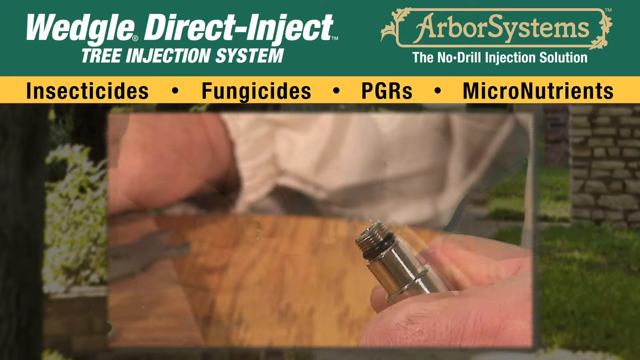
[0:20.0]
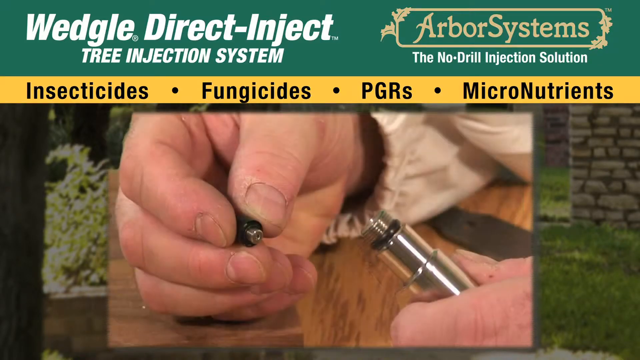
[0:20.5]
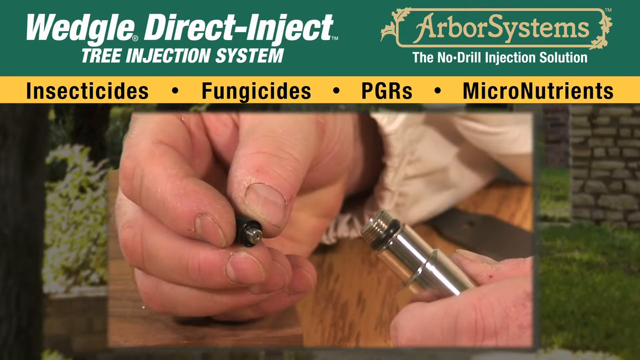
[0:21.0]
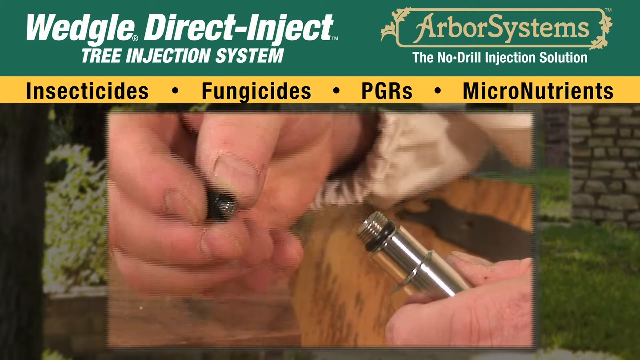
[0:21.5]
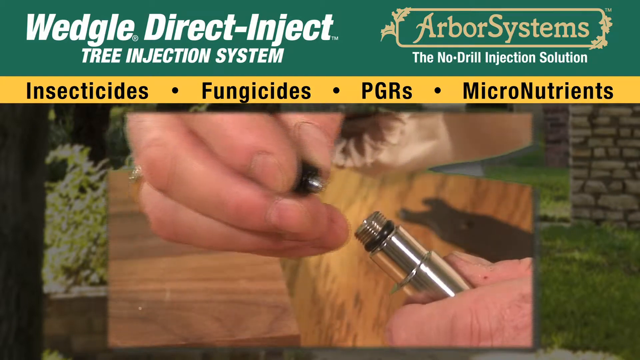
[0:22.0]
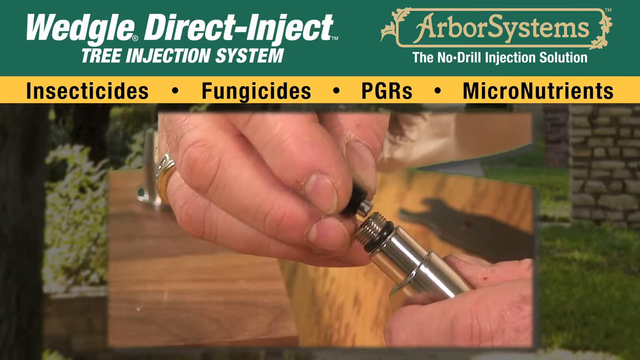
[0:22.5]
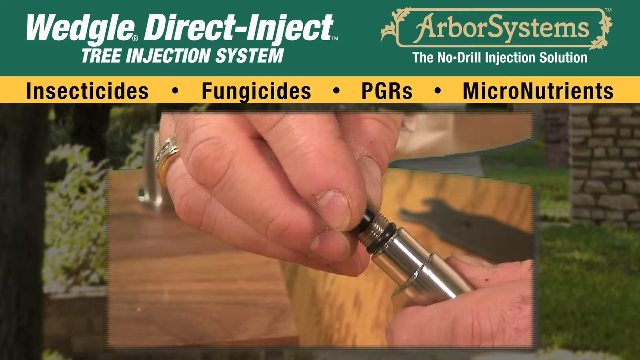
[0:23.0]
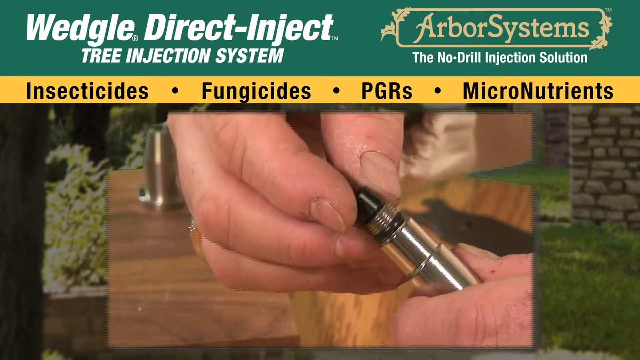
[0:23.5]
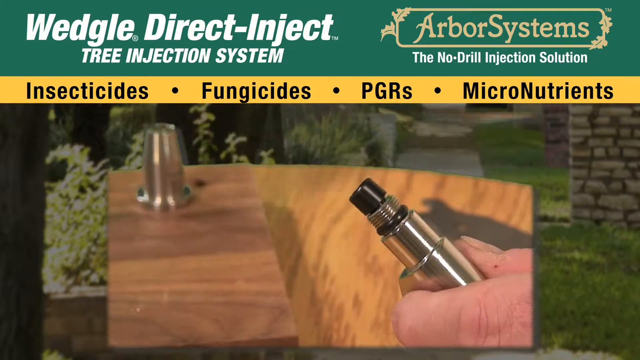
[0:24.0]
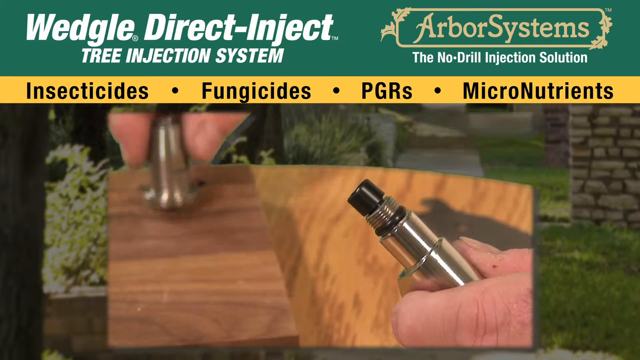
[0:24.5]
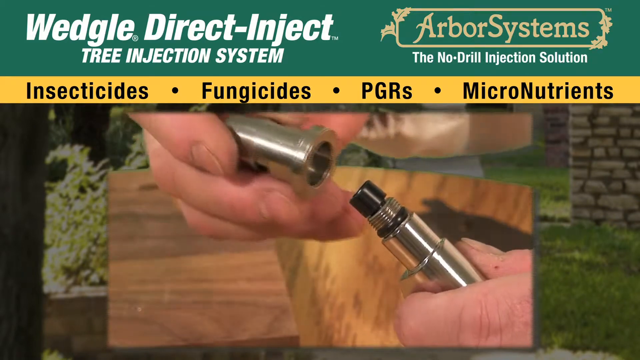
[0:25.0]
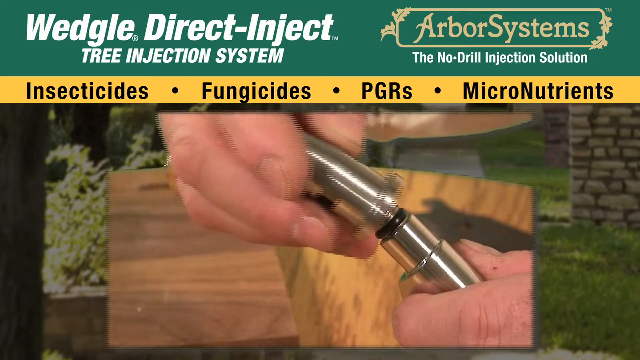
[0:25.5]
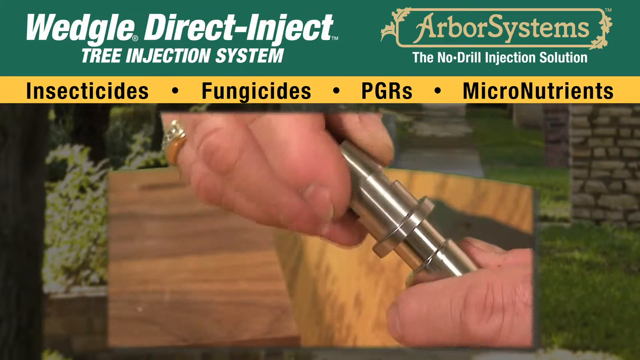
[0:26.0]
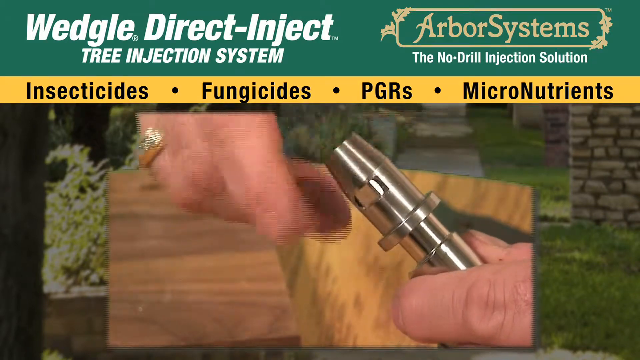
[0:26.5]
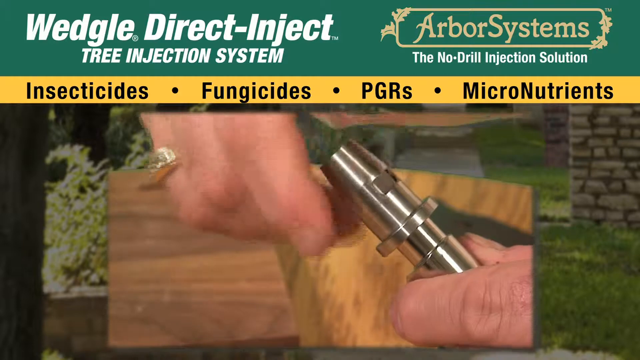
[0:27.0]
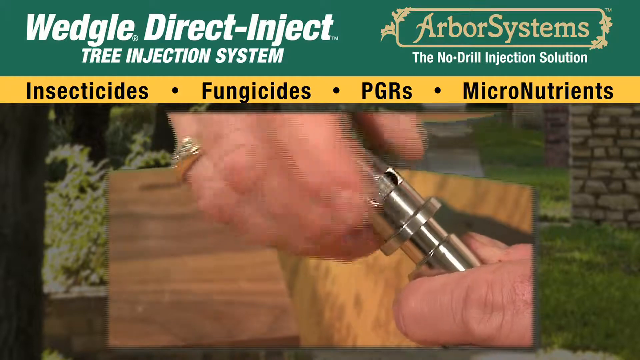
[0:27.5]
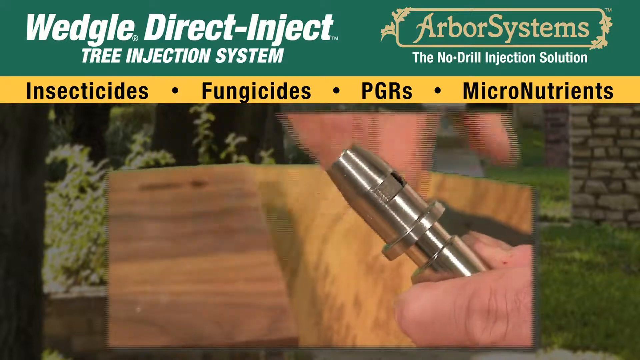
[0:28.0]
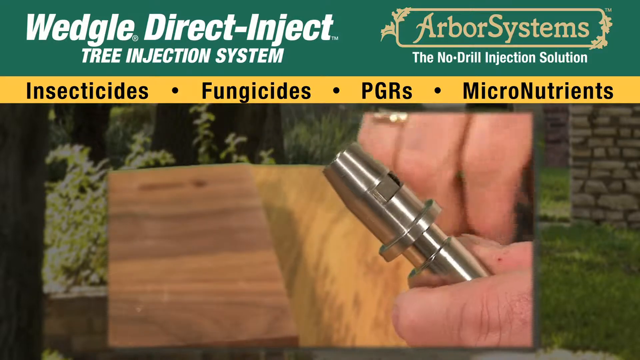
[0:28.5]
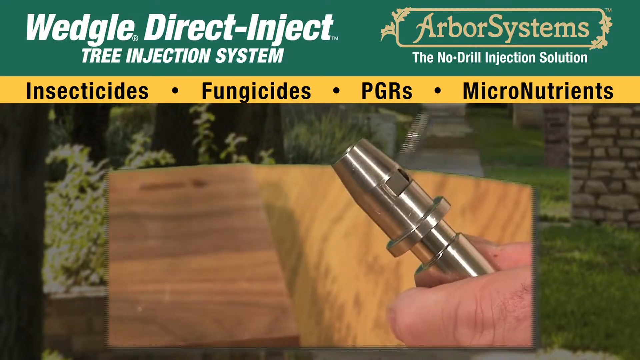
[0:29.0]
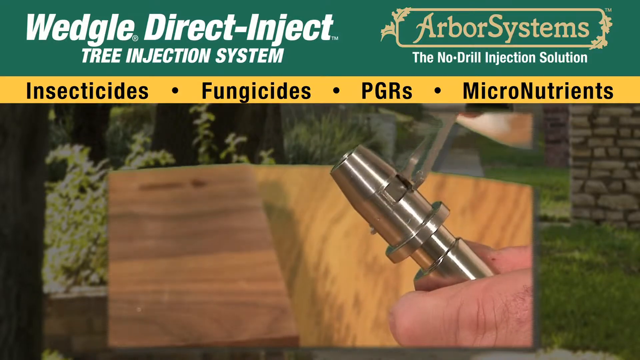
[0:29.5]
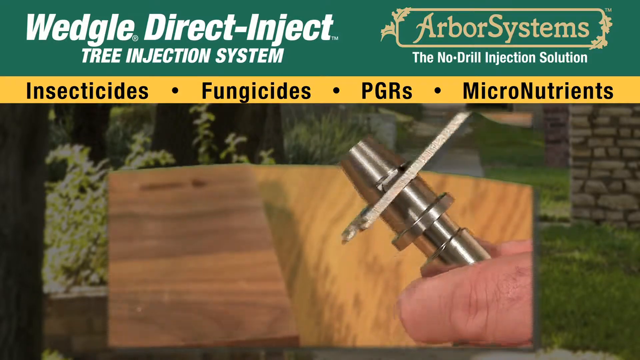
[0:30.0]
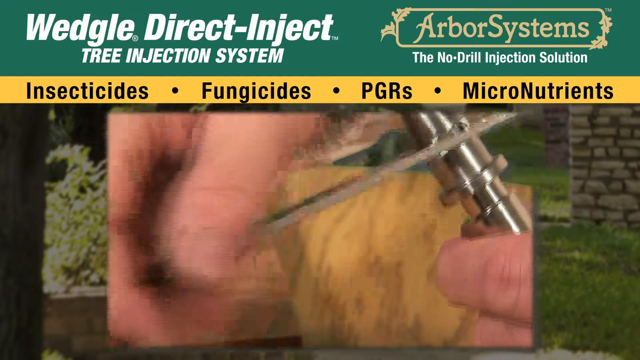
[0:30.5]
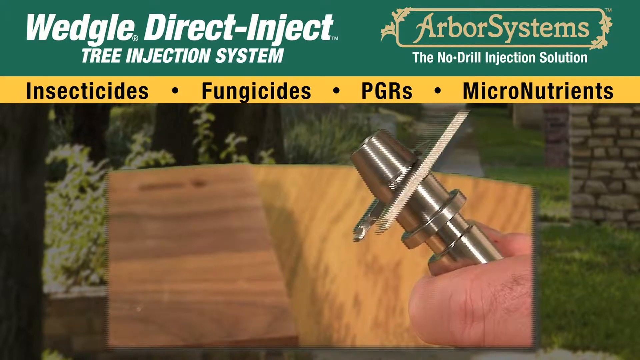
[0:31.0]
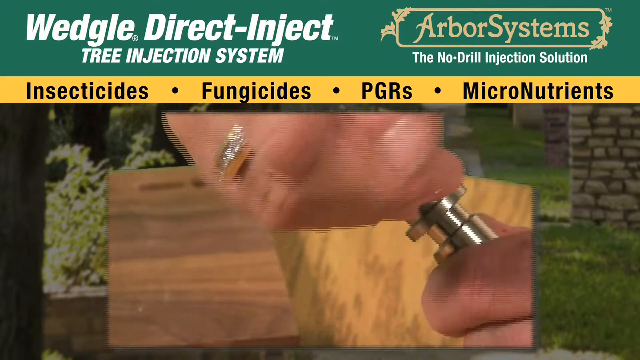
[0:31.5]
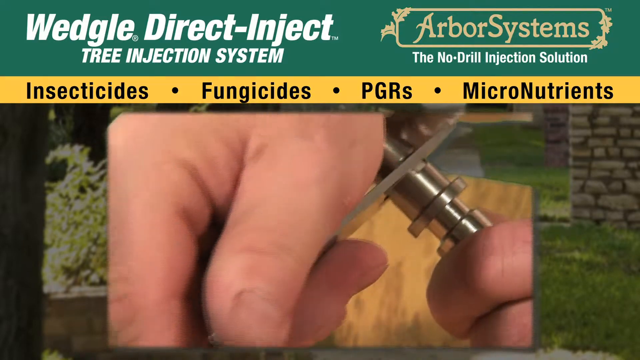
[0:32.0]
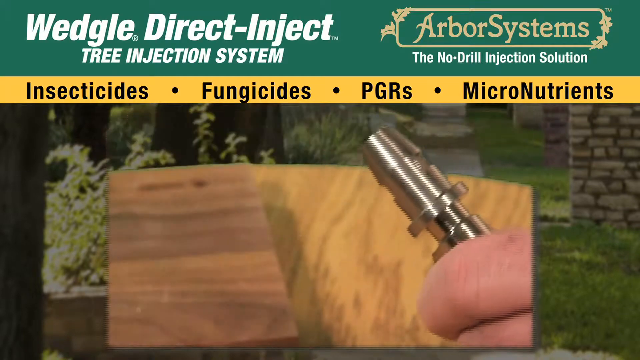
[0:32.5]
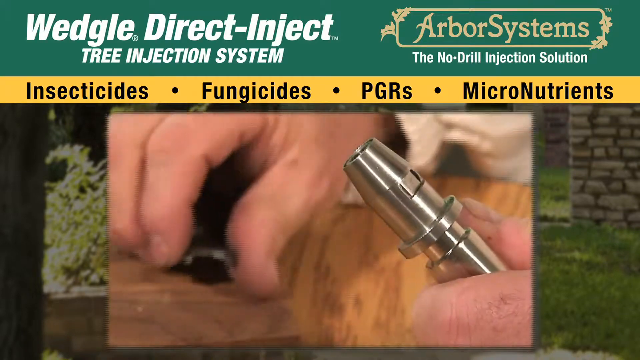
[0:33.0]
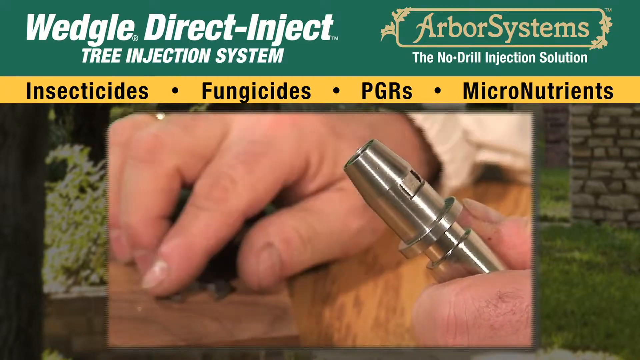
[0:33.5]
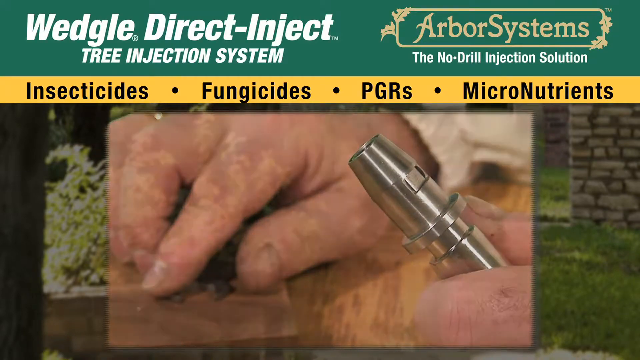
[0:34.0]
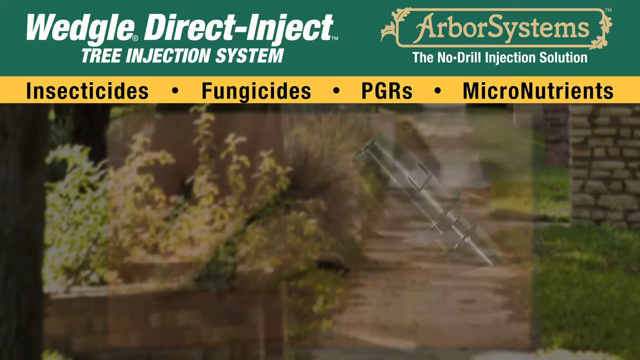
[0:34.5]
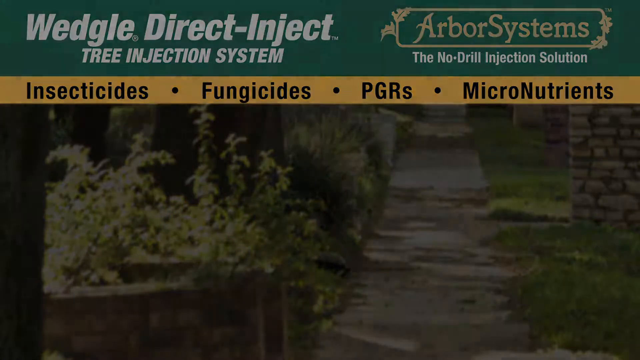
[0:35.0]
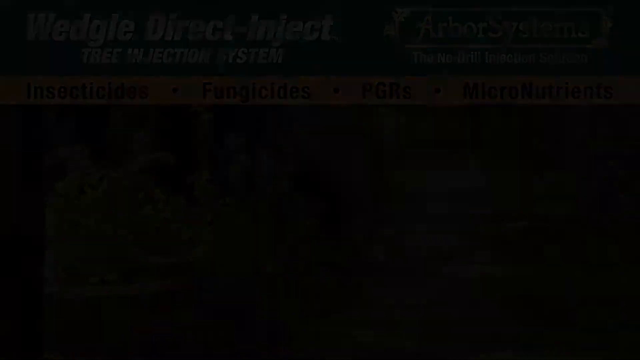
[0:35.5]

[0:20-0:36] The action shot continues, showing a man putting together a nozzle that he is apparently going to use in a tree. This seems to be the device being advertised, possibly something injected into the tree to give it nutrients. The video features many action shots and logos of the company.